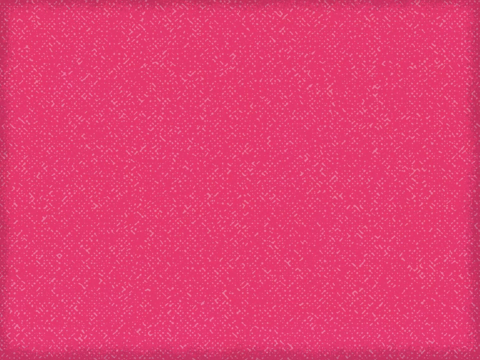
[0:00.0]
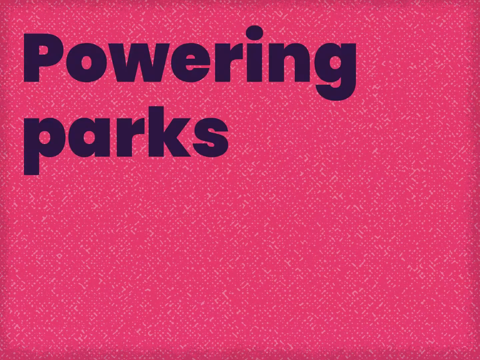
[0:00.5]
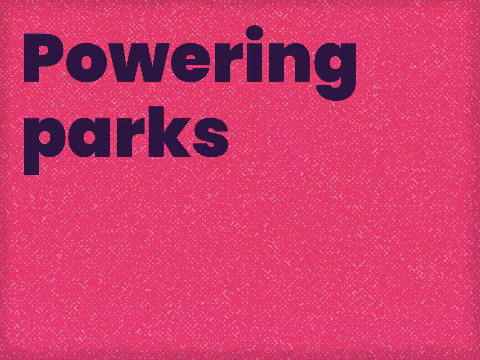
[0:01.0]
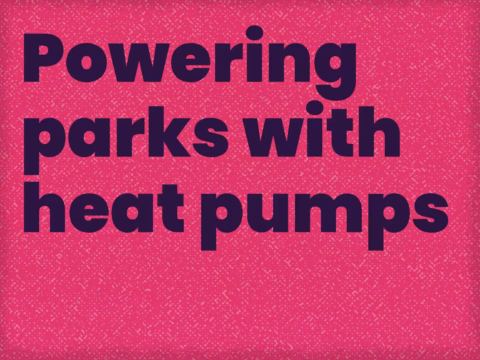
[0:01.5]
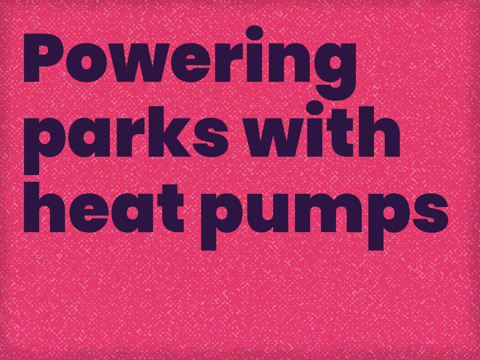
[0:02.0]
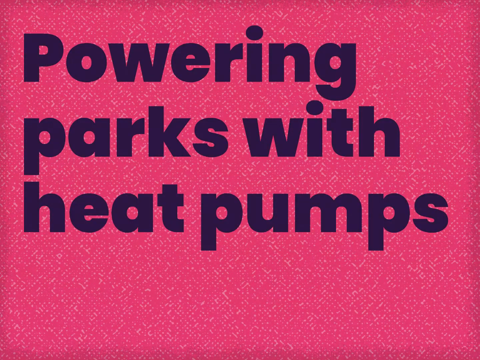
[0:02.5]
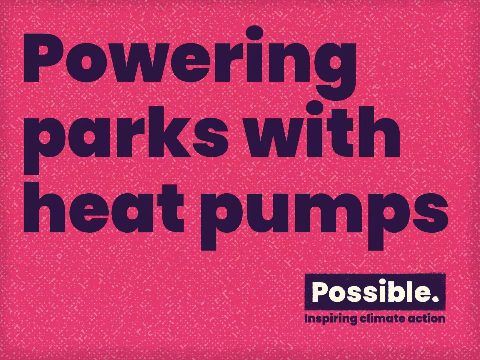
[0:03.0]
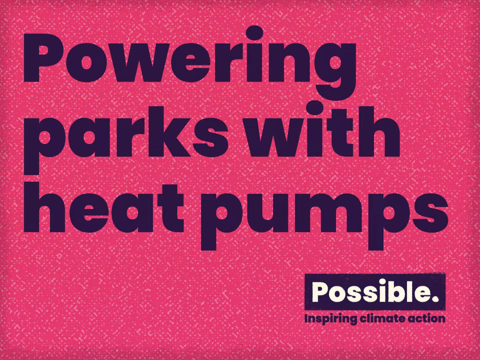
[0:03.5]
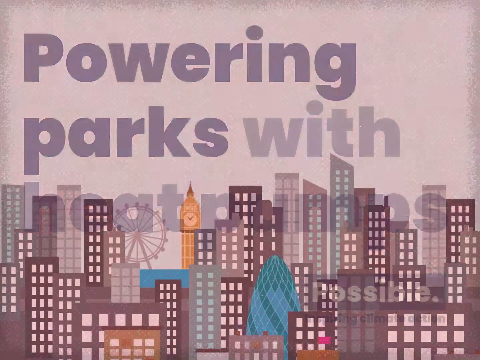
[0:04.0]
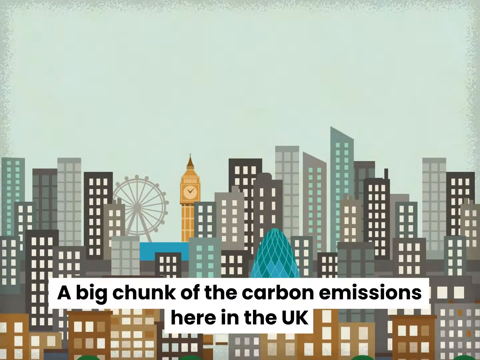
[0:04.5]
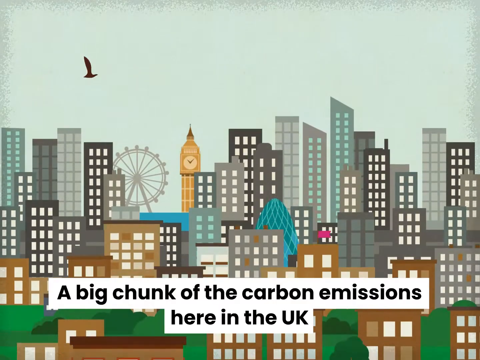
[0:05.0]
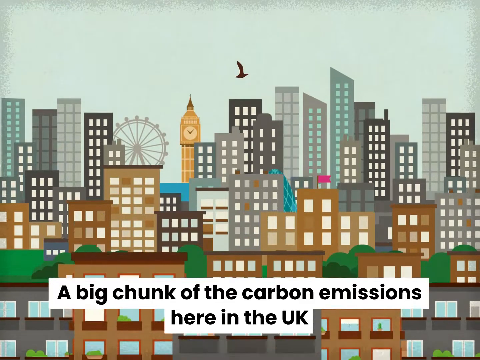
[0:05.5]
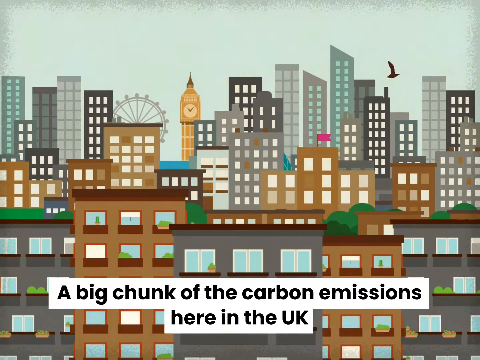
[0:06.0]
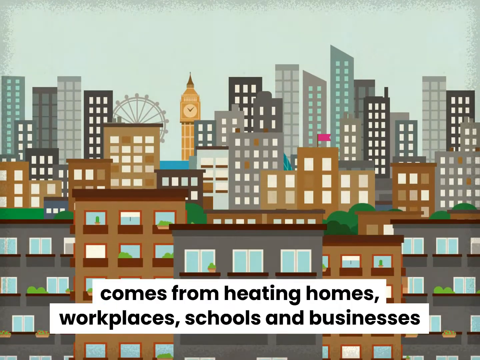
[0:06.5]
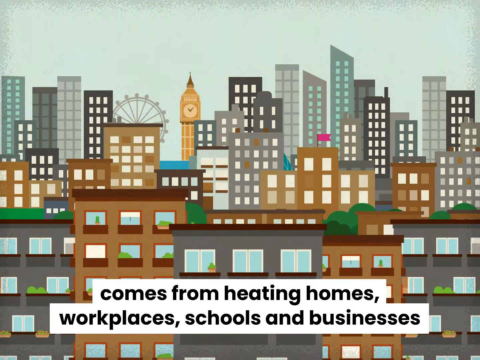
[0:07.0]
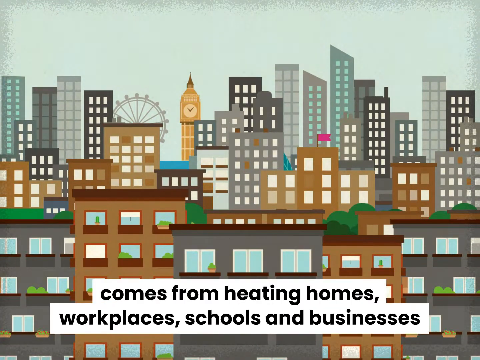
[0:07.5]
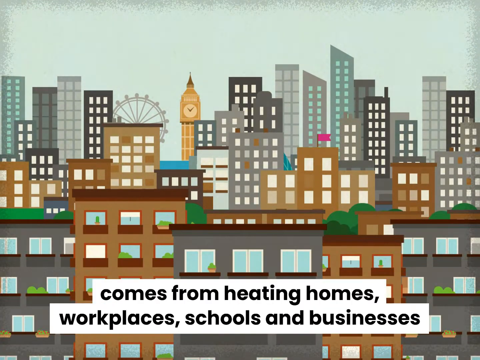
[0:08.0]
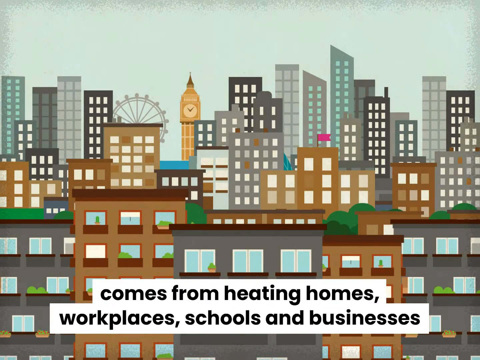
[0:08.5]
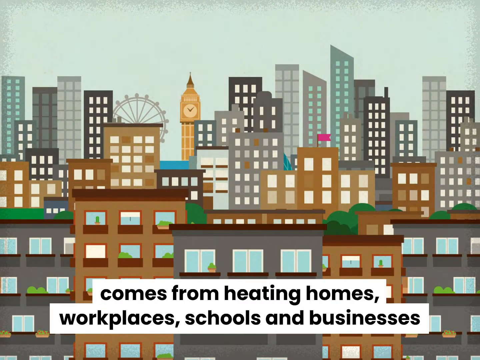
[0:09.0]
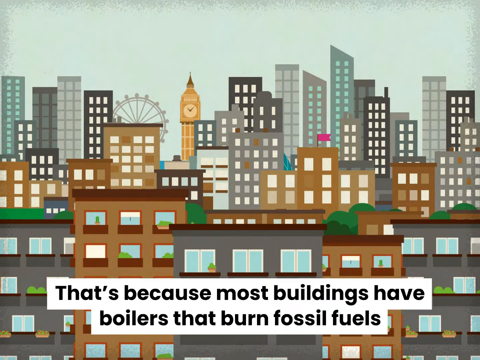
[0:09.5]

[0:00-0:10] A red screen appears with very large navy blue text reading "Powering parks with heat pumps." In the bottom right corner it says "Possible inspiring climate action." Subtitles run along the bottom, one reading "a big chunk of." In the background is a giant city with a bunch of flashing lights and buildings, as well as a Ferris wheel and what looks like a big London Tower.